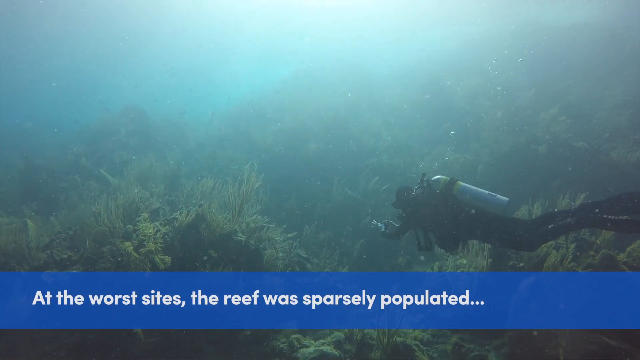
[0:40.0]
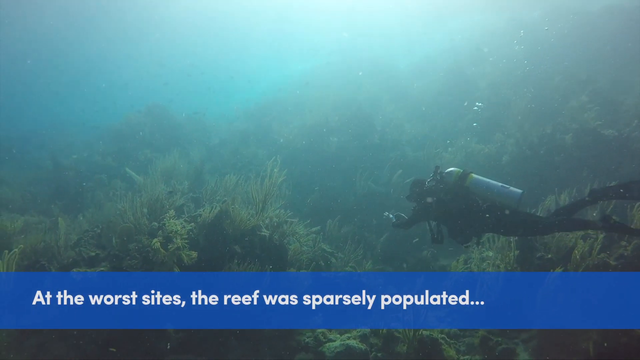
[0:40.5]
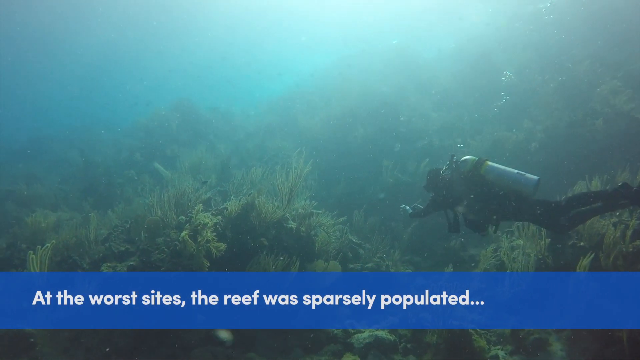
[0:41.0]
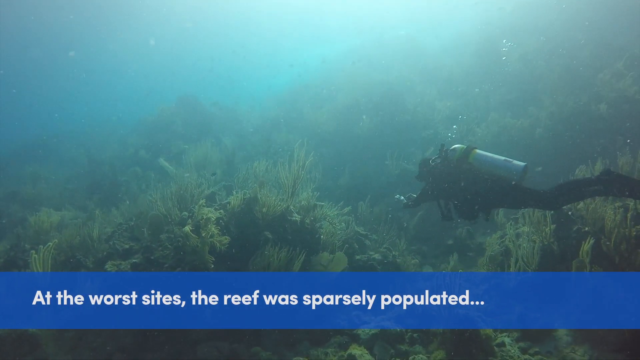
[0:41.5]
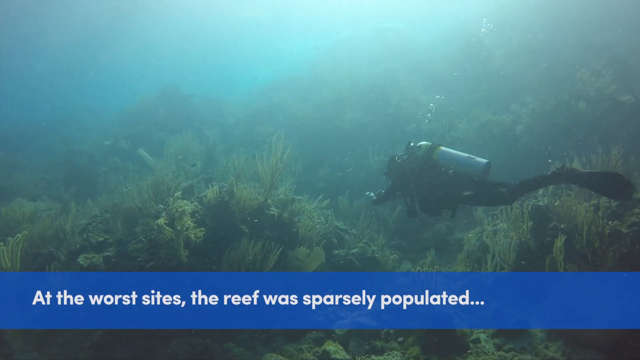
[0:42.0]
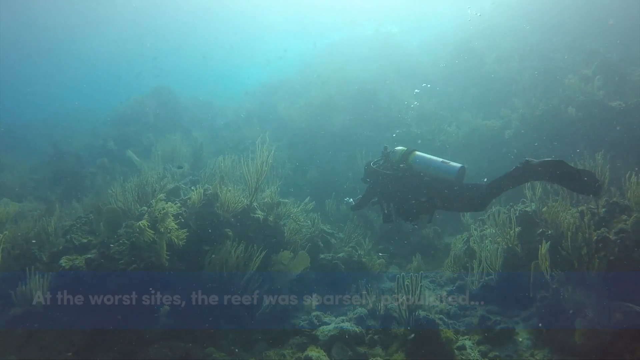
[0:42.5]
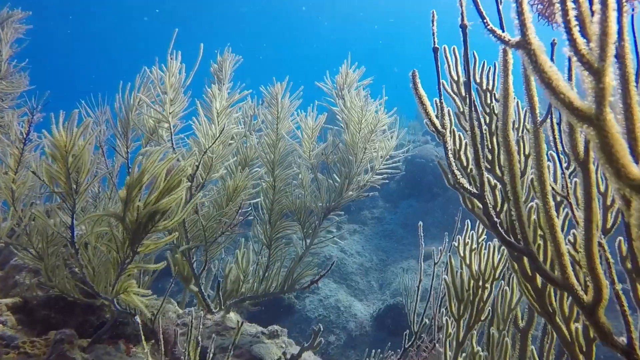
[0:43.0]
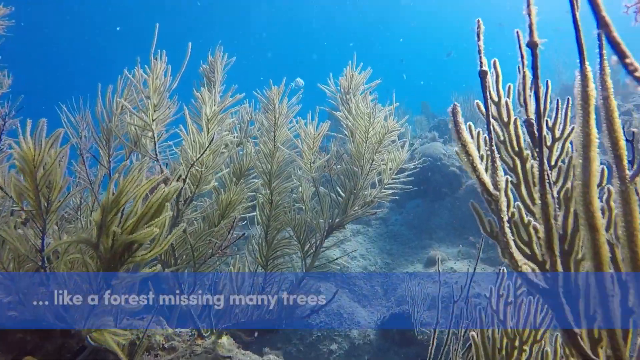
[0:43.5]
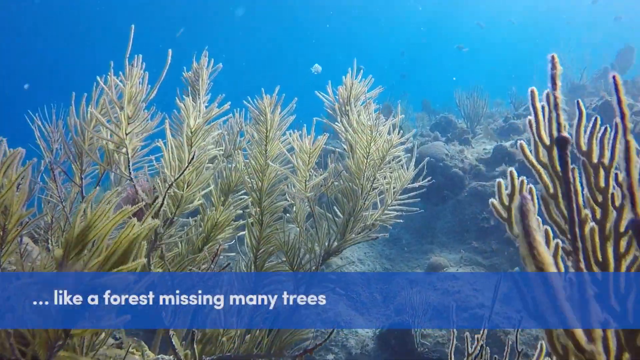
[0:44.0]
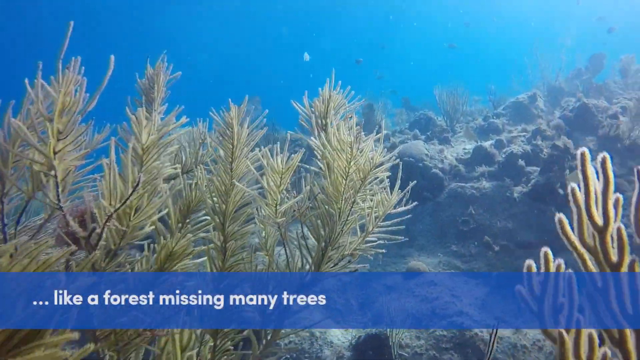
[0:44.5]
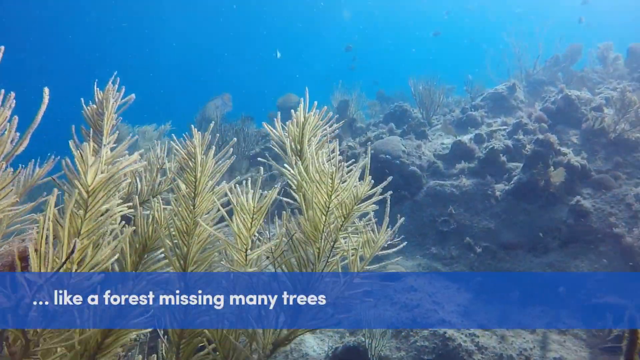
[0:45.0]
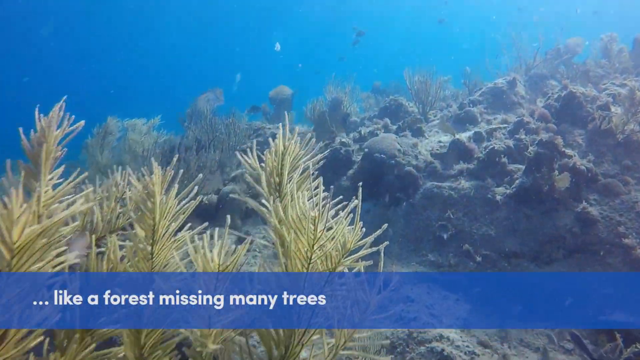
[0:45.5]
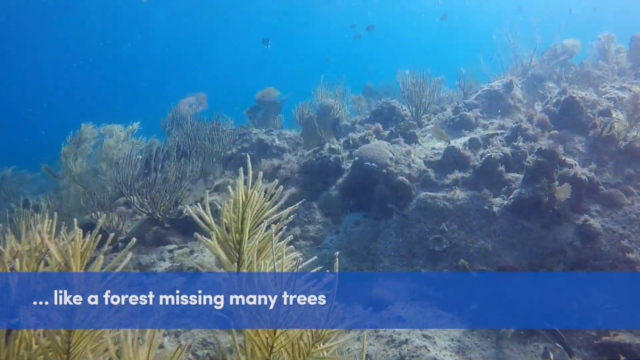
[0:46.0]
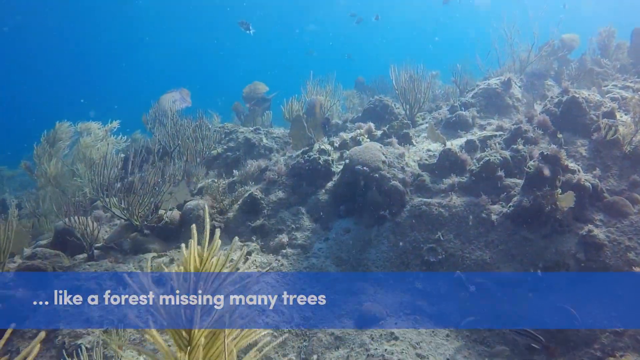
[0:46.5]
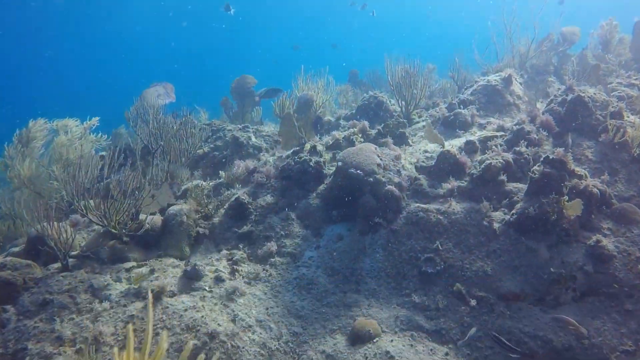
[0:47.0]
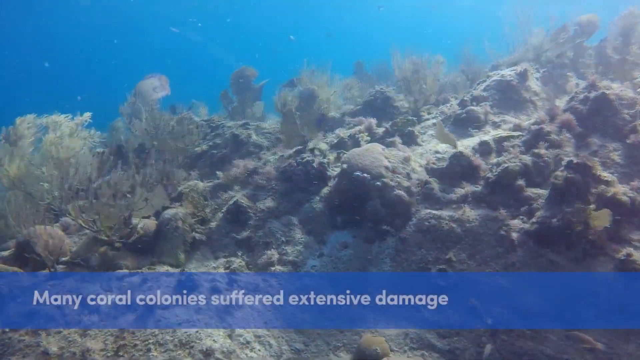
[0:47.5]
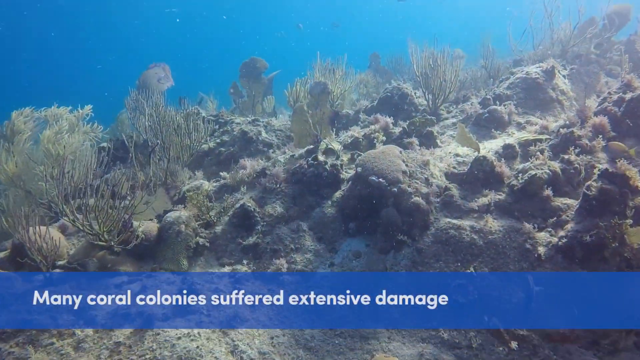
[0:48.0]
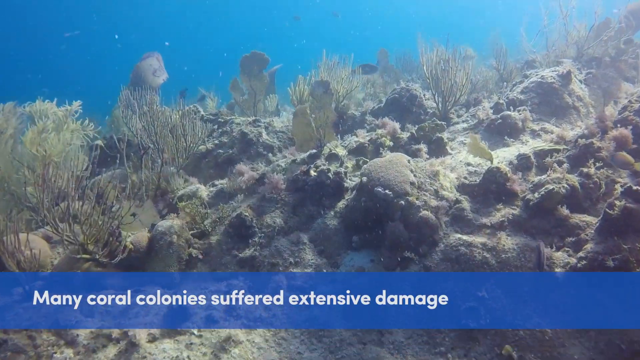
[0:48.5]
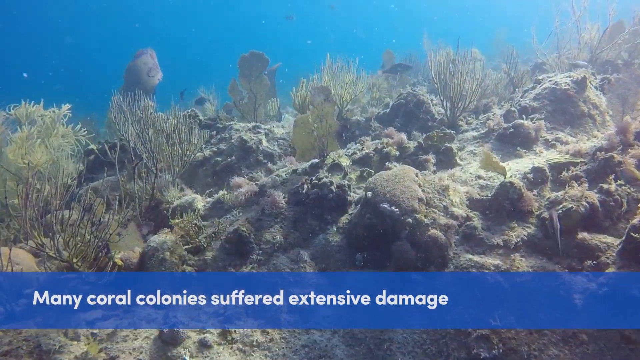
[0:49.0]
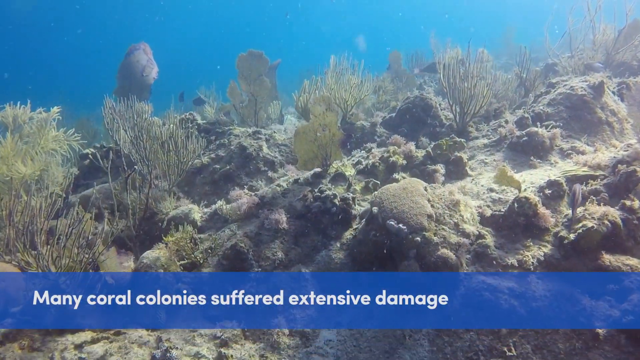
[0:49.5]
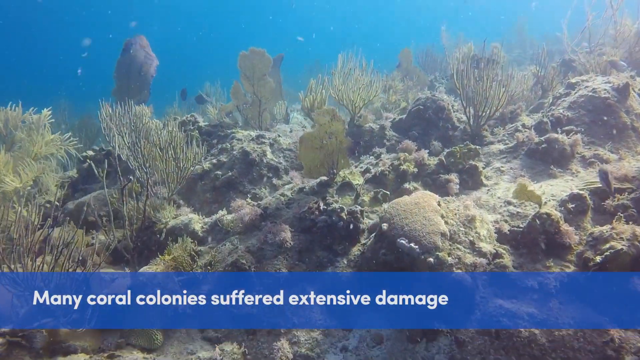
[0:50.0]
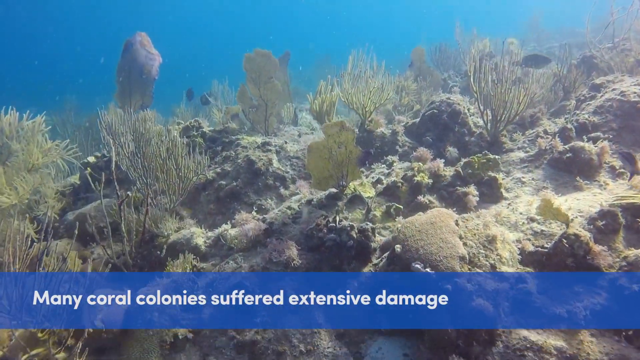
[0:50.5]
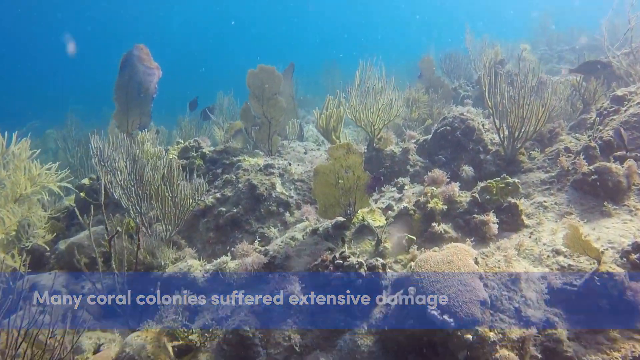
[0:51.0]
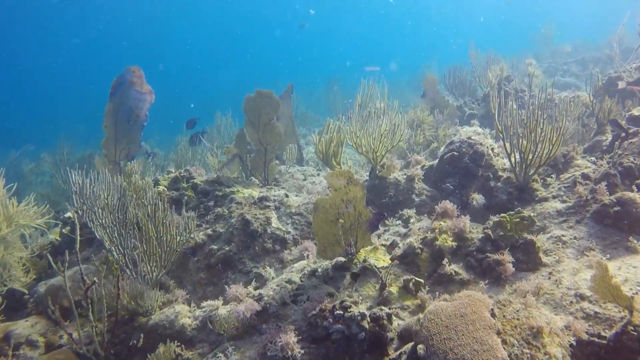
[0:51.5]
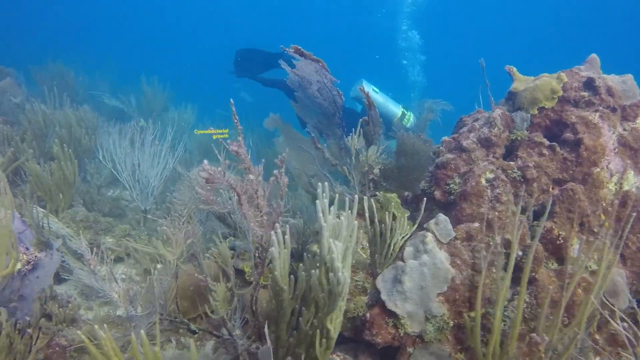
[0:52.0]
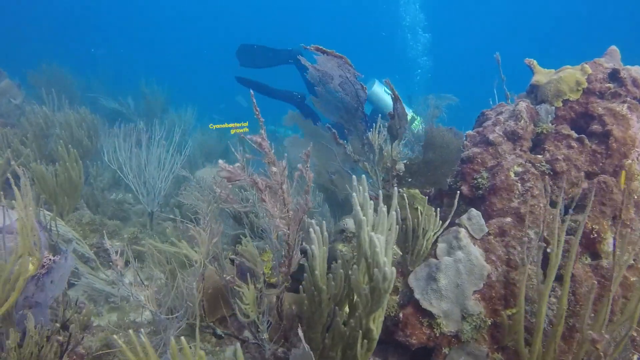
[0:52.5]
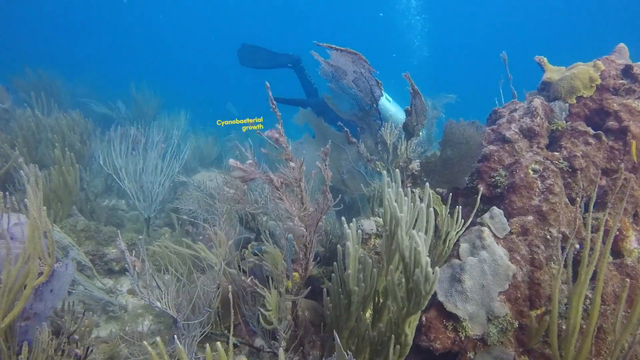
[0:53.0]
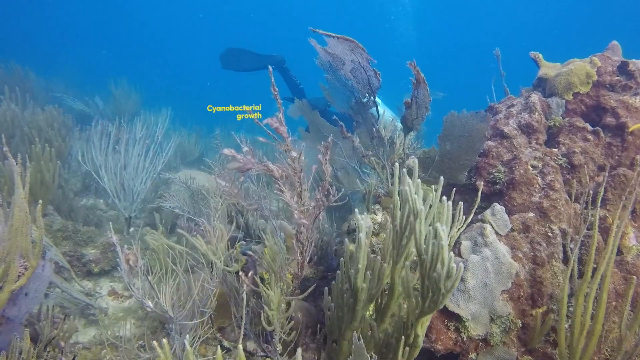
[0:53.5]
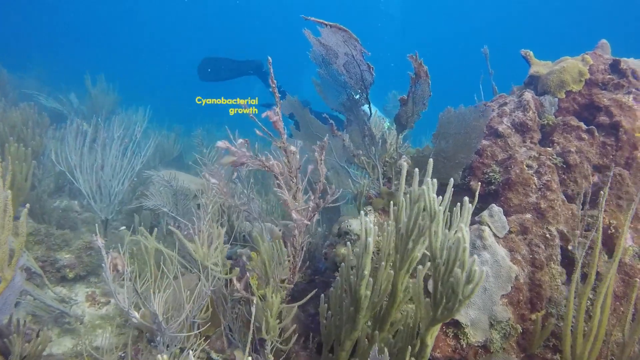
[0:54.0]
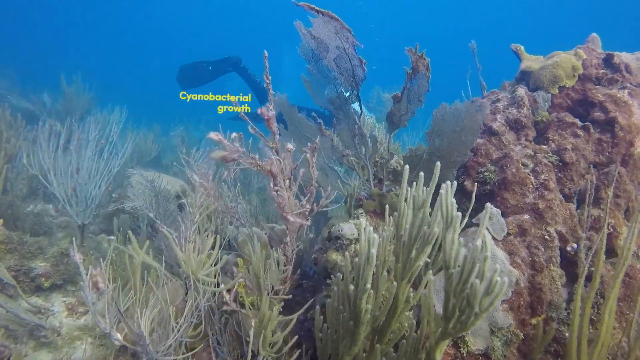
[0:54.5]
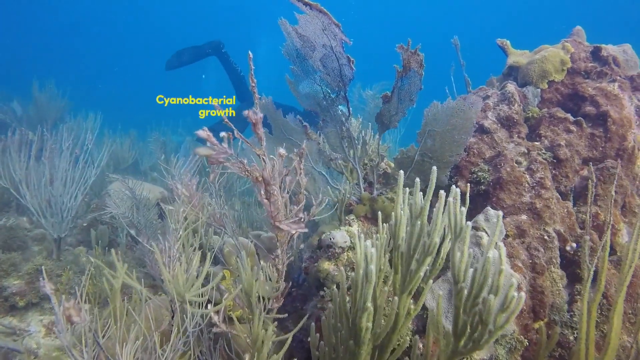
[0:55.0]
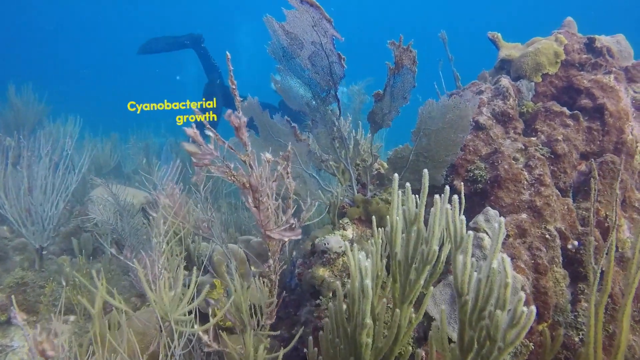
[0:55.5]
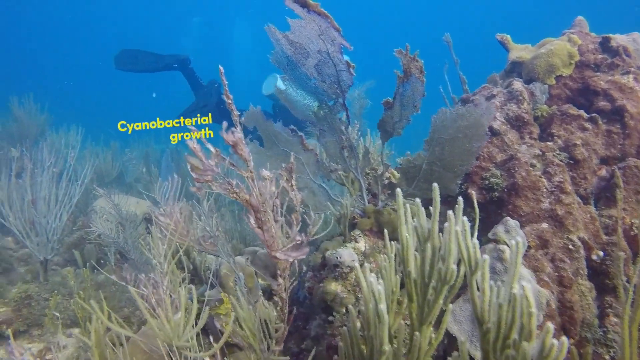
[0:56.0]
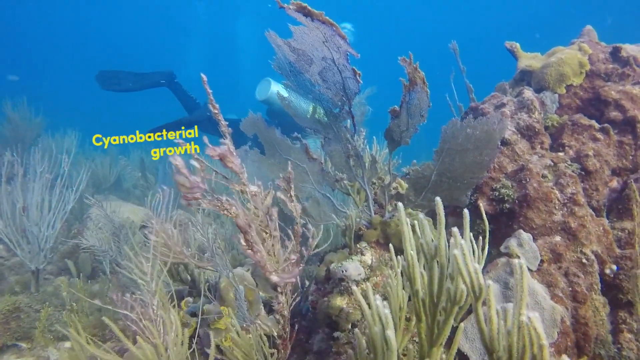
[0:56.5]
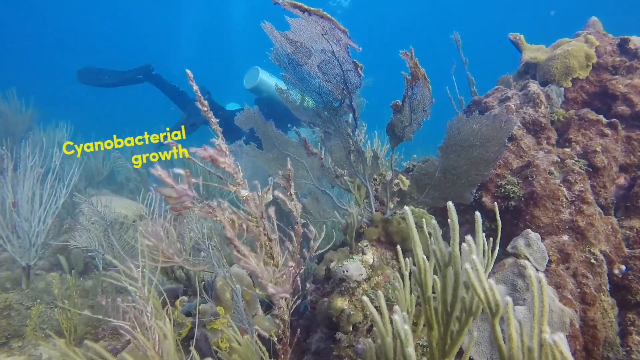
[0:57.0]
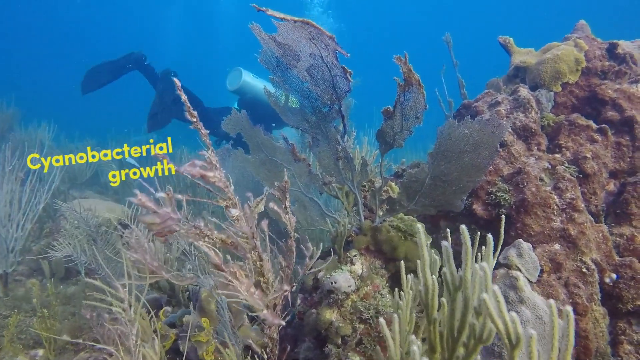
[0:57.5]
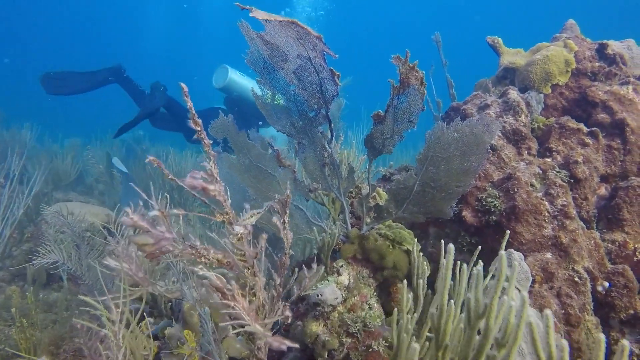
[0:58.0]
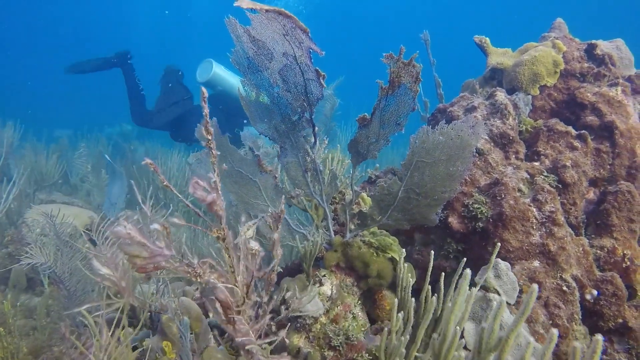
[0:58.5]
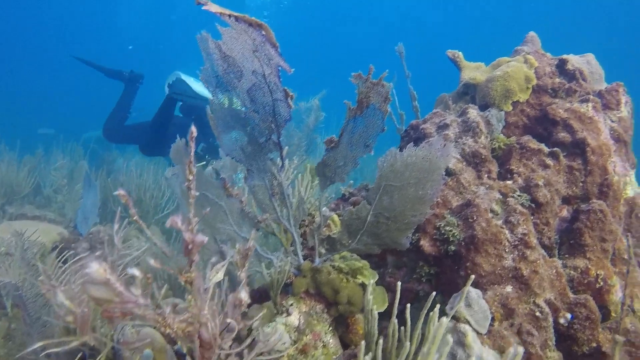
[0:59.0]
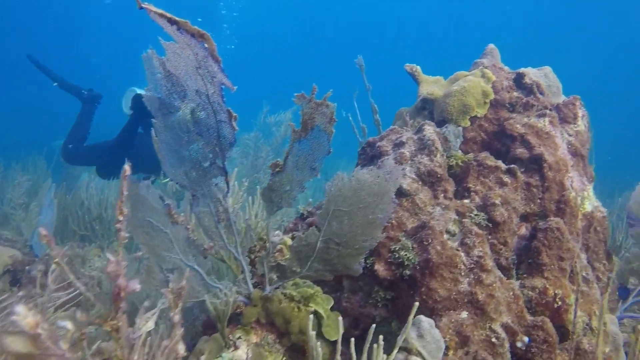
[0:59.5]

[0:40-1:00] Scuba divers are in the water. At the bottom, a blue rectangle with white text reads "at all sites the reef was partially populated". Text then reads "like a forest missing many trees", followed by "elkhorn coral" in yellow text. Some kind of rock is visible. The swimmers wear black suits and have oxygen bottles, and they swim in water full of sunlight. There are many corals where they dive, along with tall grasses. The video is about coral reefs being dead.